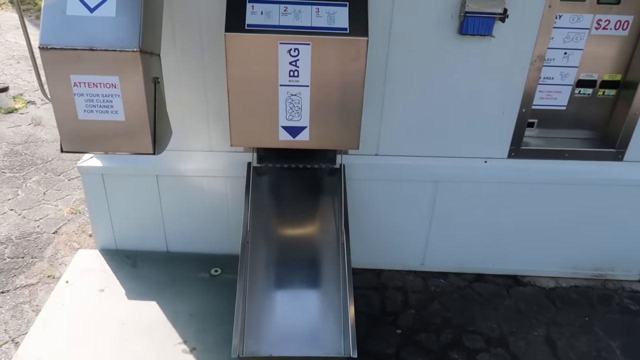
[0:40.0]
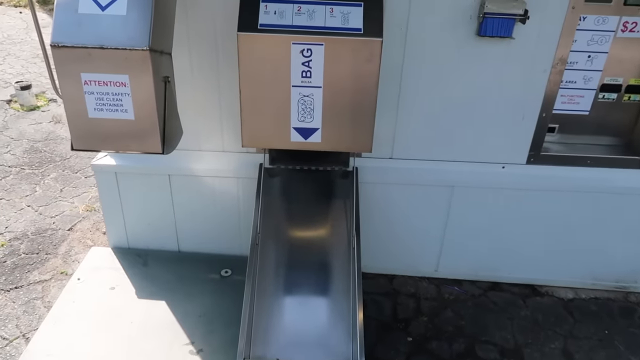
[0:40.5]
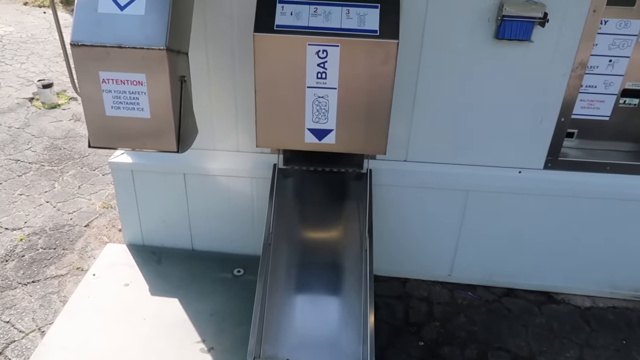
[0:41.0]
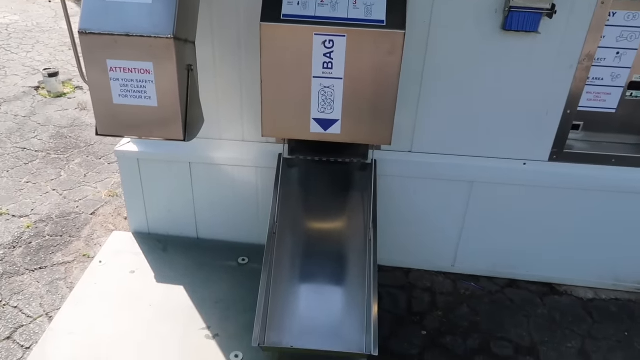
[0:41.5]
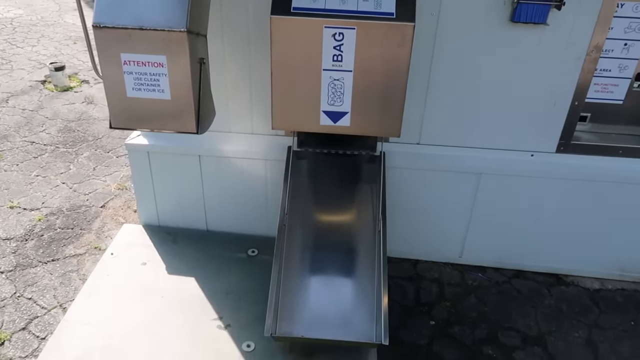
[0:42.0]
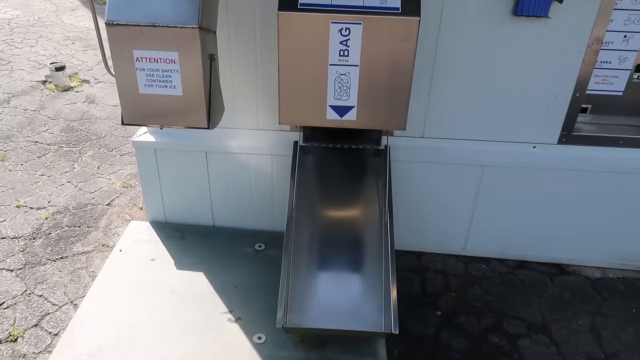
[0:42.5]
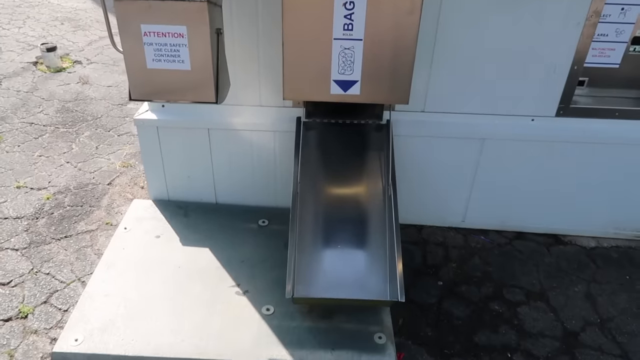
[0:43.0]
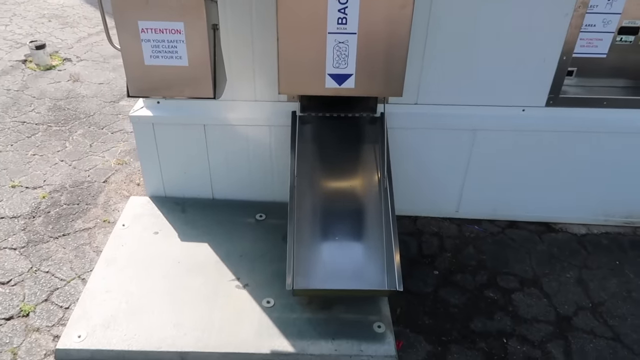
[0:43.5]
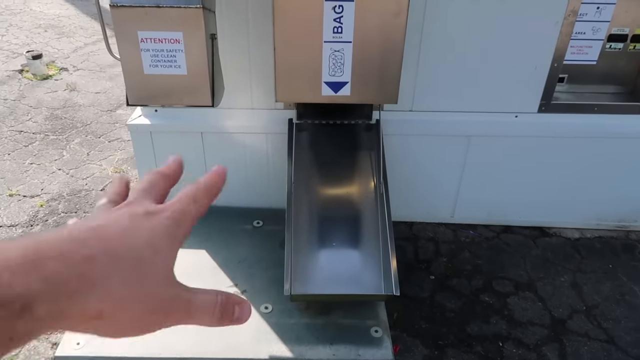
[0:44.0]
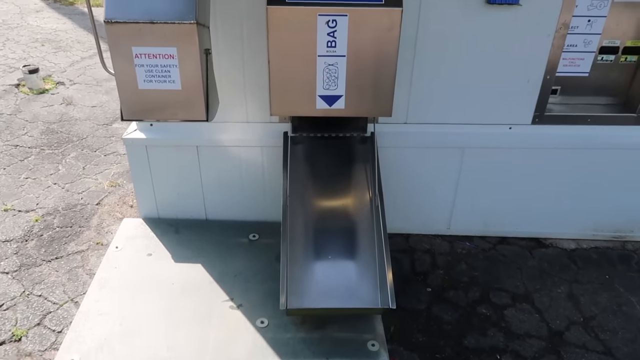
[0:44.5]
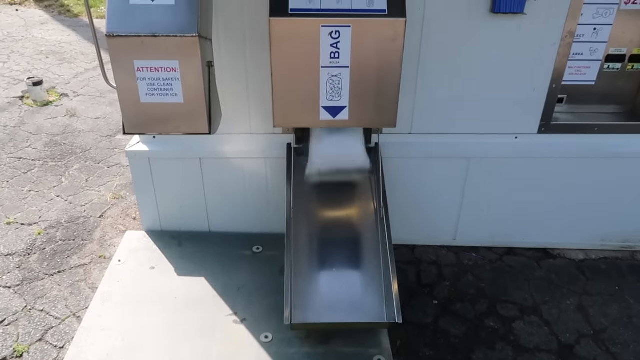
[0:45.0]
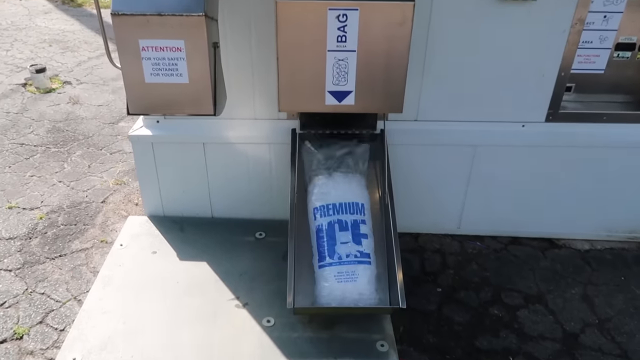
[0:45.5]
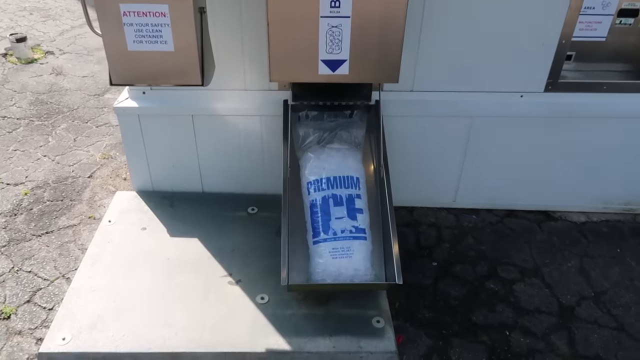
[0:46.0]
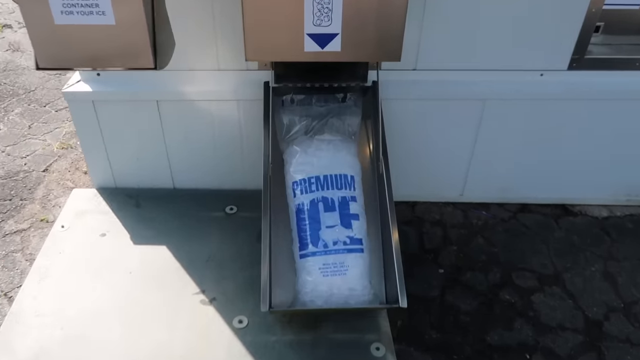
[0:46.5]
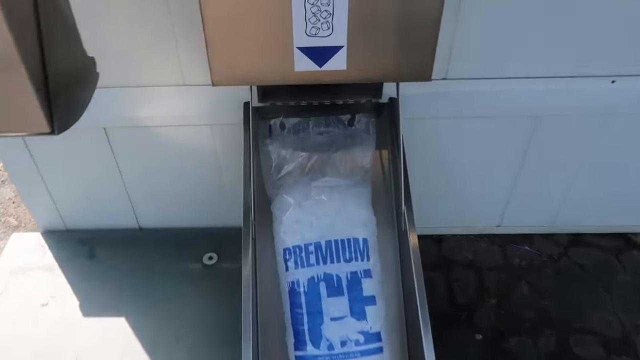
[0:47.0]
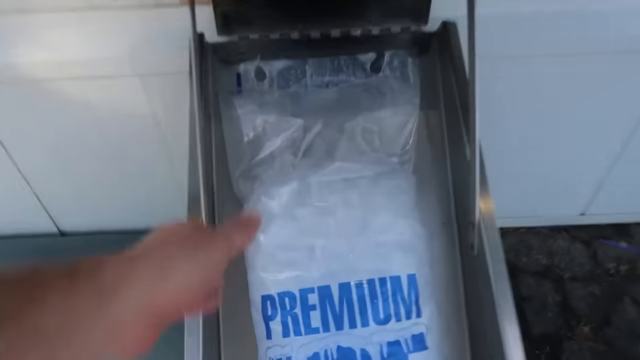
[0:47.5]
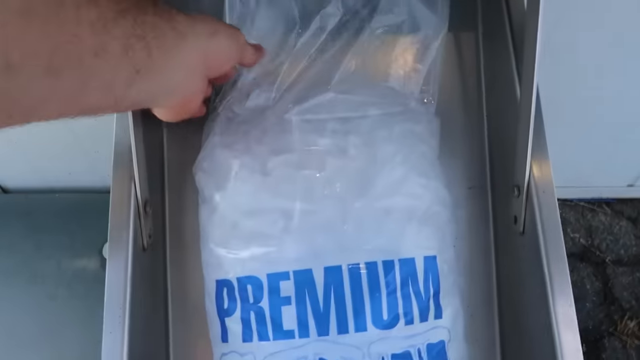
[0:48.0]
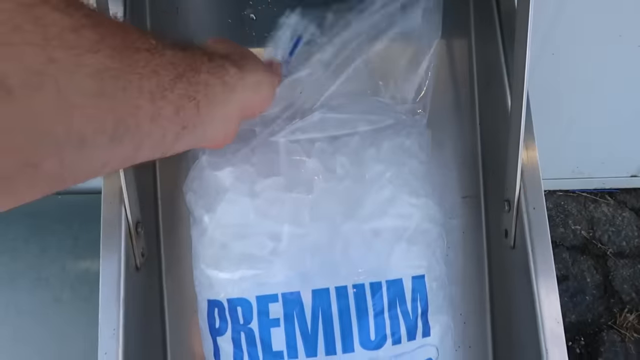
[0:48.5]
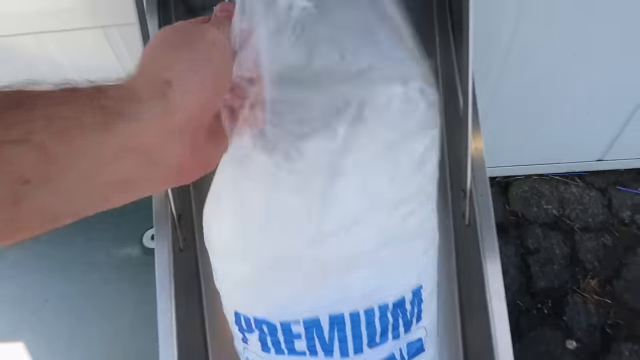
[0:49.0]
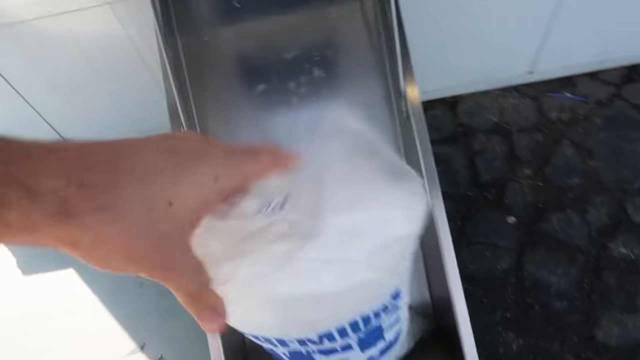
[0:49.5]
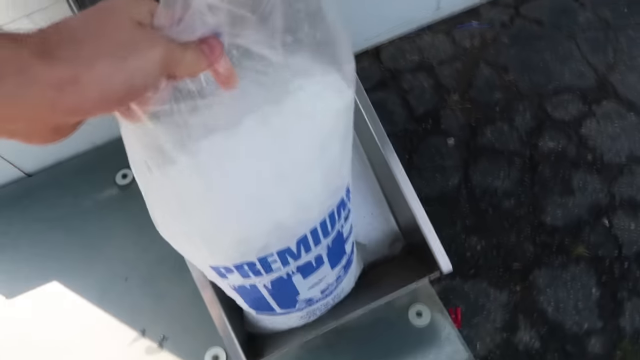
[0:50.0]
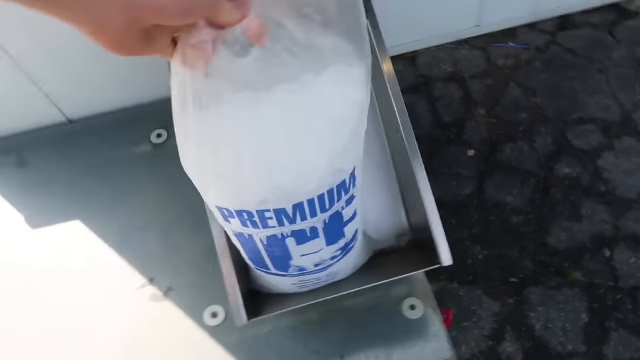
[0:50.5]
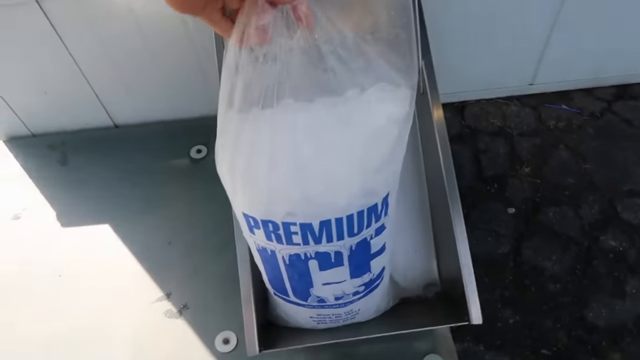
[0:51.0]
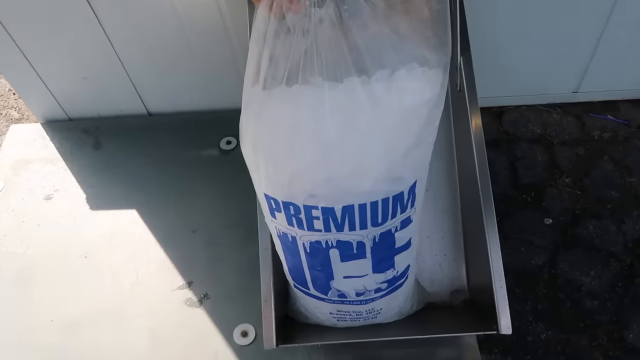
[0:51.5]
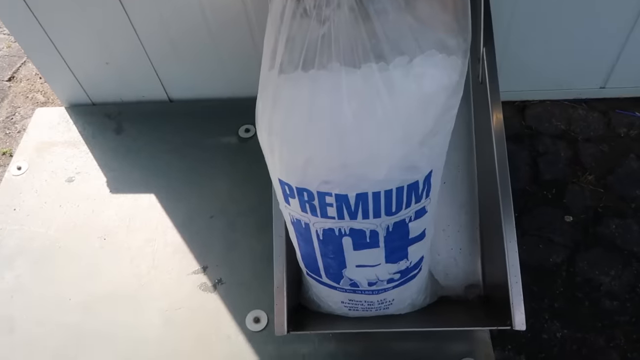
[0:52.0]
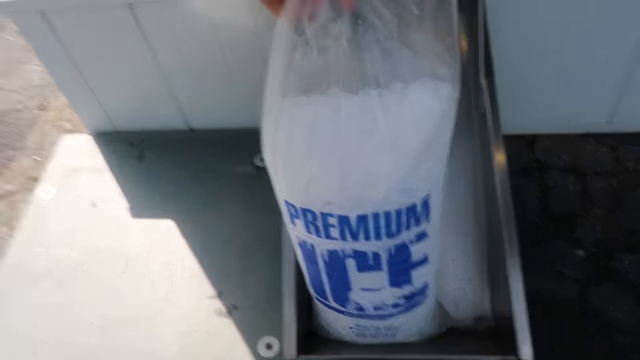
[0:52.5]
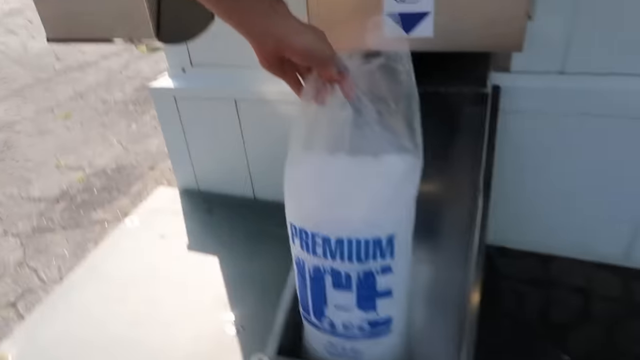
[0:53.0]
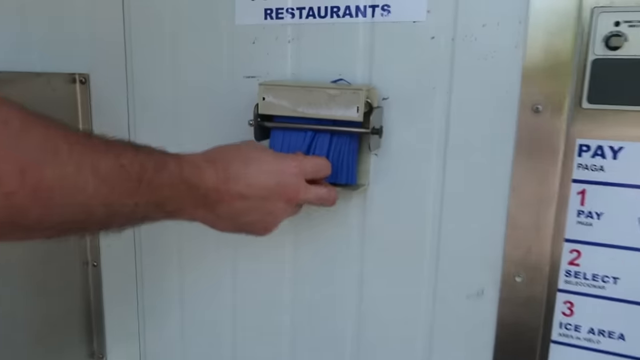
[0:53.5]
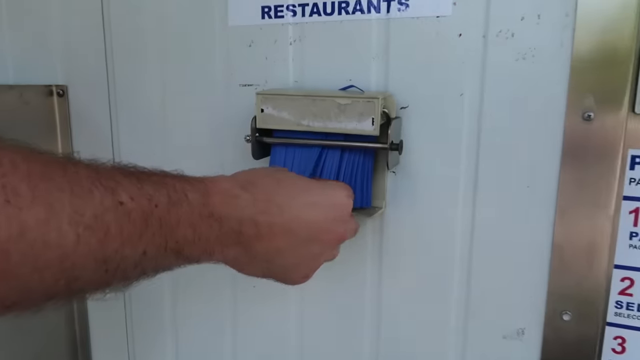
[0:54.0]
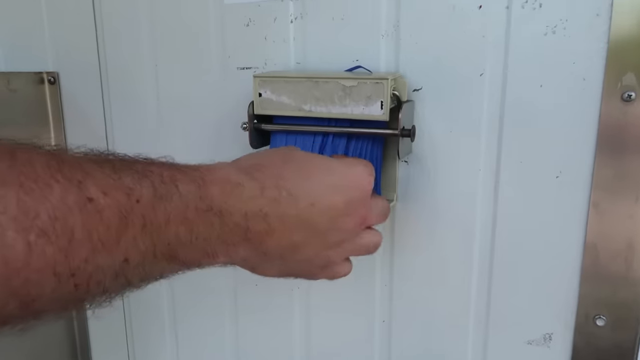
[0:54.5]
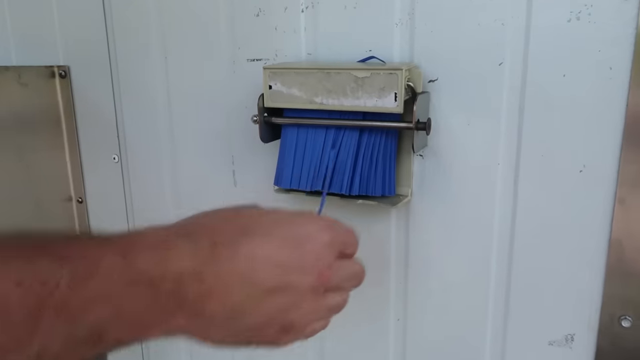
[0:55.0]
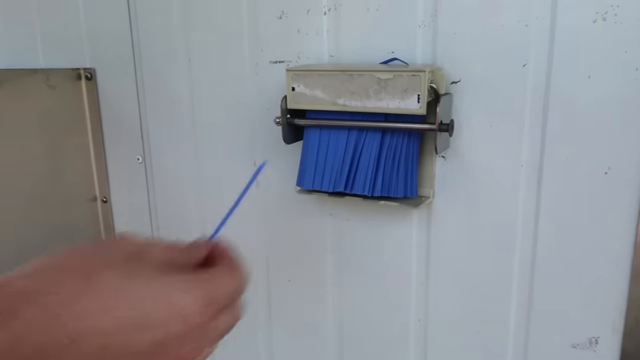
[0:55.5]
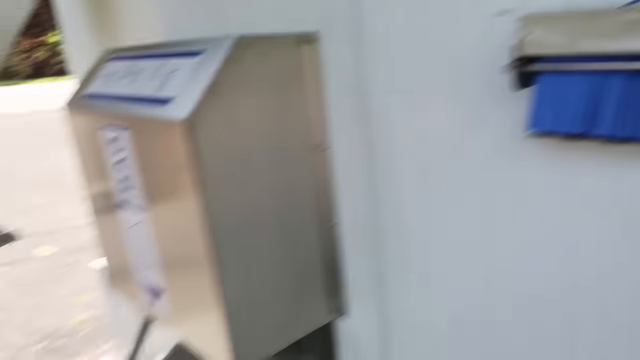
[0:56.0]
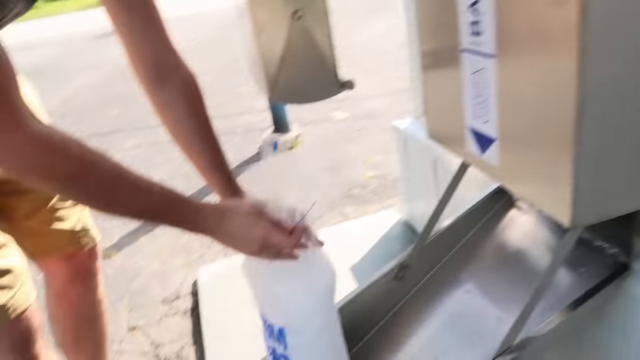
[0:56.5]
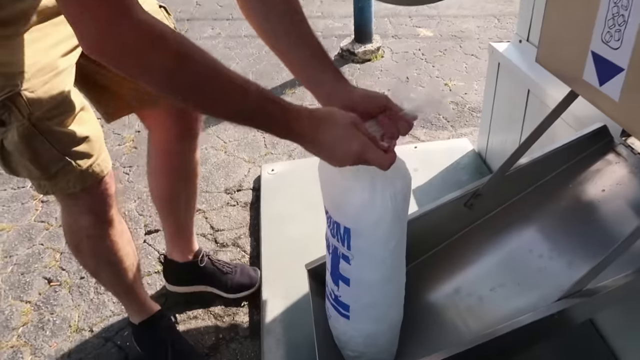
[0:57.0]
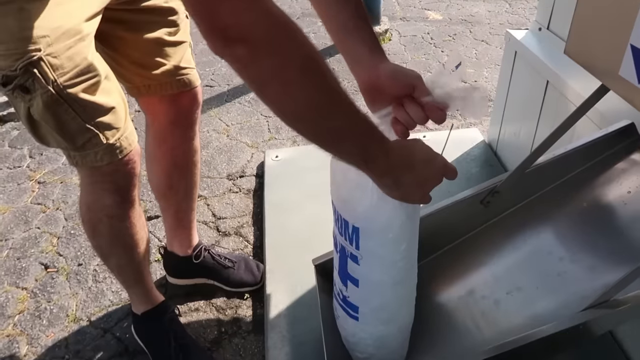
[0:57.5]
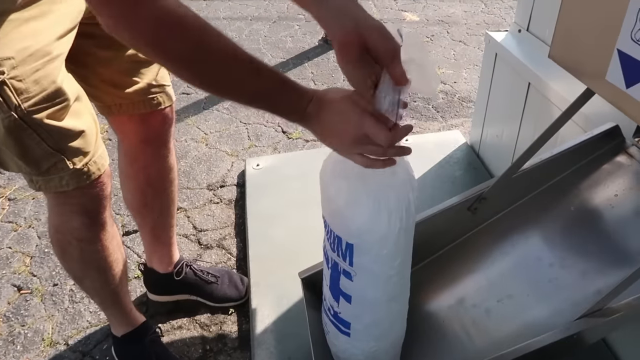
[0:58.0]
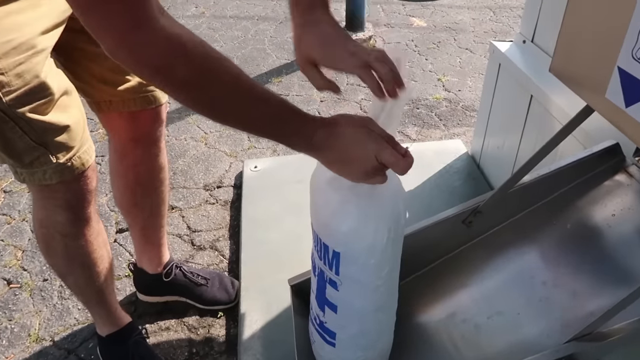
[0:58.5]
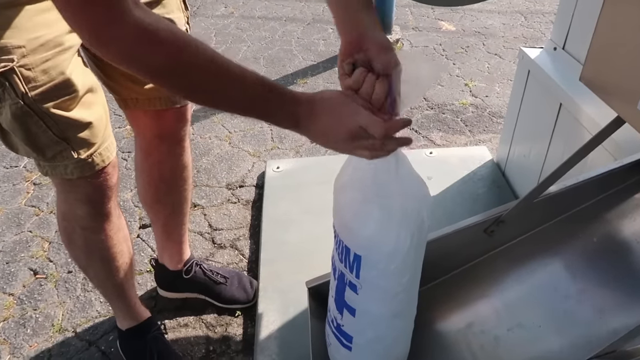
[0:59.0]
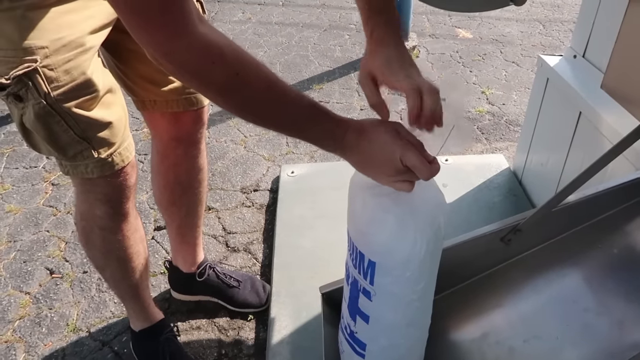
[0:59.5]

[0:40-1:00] The camera points at the part of the ice vending machine where a bag of ice comes out. A hand gestures toward the machine, and a bag of ice comes out. The bag is plastic, with "premium ice" written in blue on the front. The person holding the camera walks forward, grabs the bag of ice and shows it for a second. The camera then switches to a part of the vending machine that has blue ties for the bags of ice. The man, who has light skin and wears shorts and sneakers, uses a tie to tie the bag of ice closed. The vending machine is outside, and it is daytime and bright.